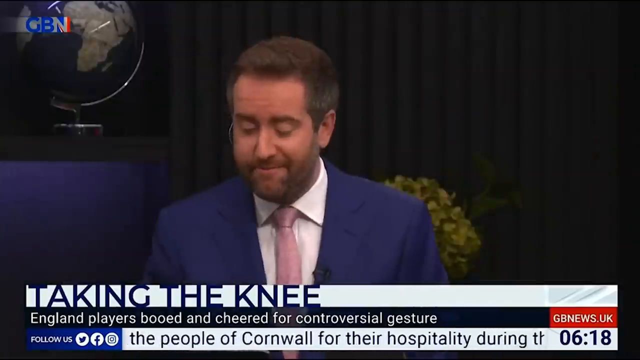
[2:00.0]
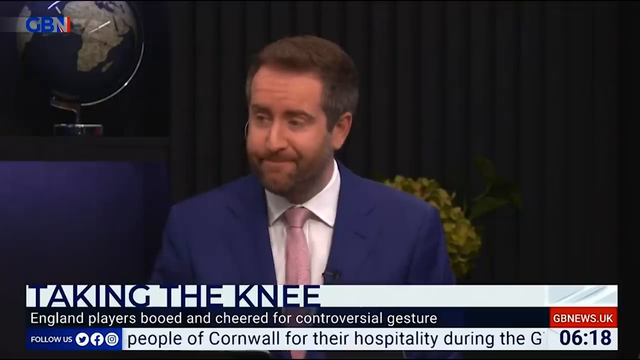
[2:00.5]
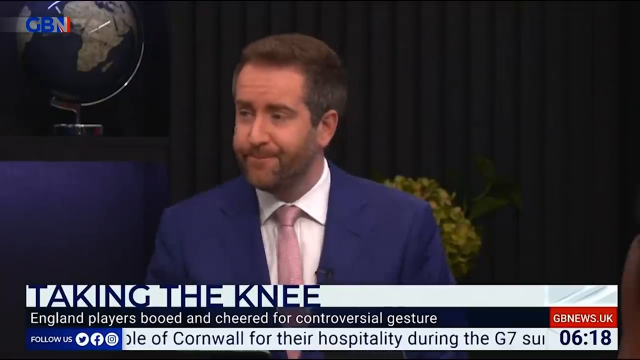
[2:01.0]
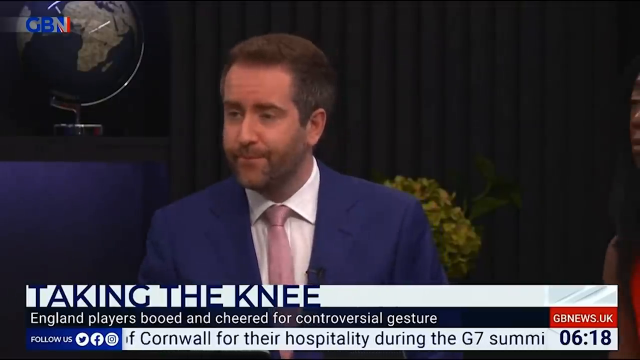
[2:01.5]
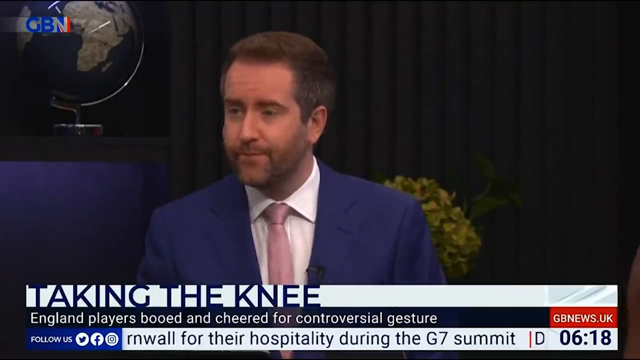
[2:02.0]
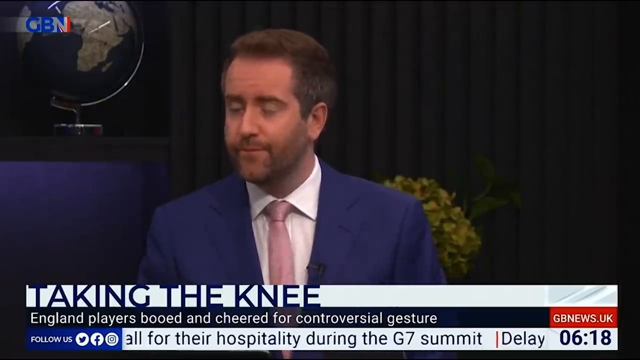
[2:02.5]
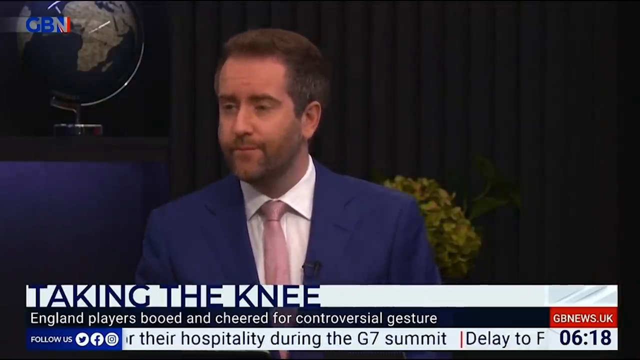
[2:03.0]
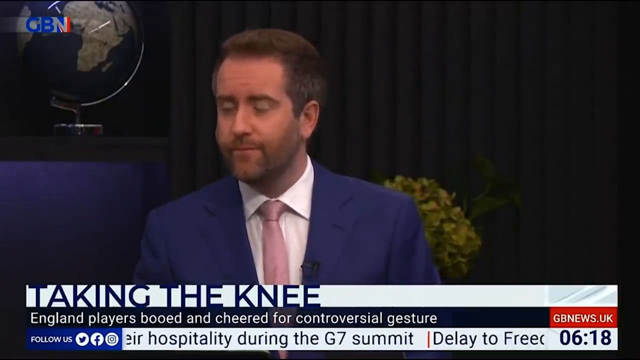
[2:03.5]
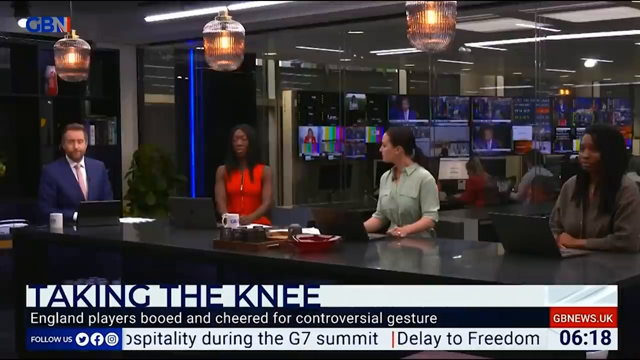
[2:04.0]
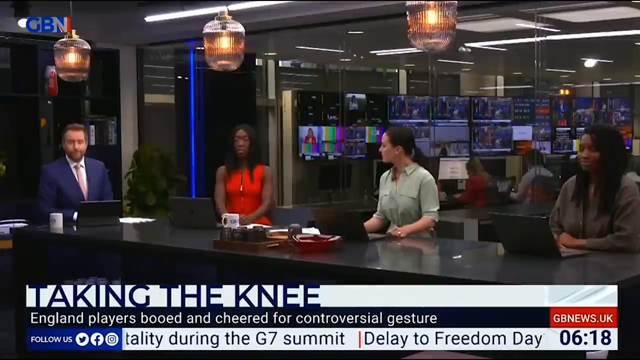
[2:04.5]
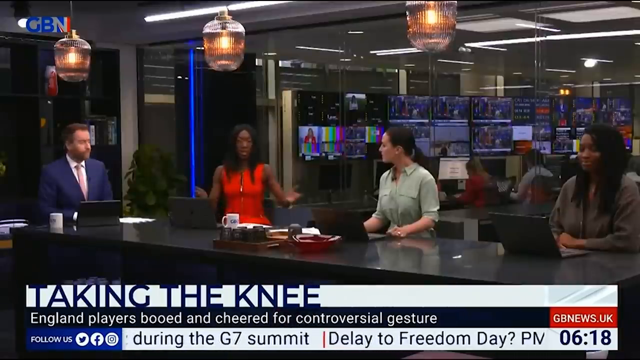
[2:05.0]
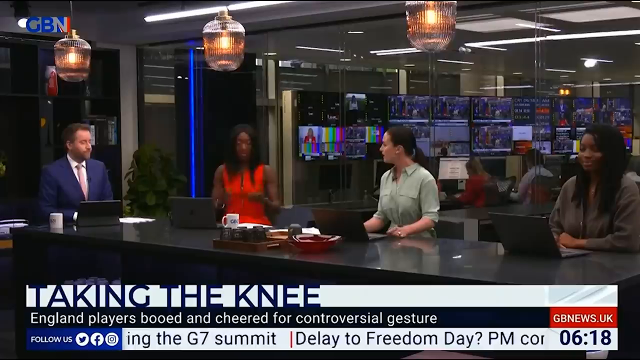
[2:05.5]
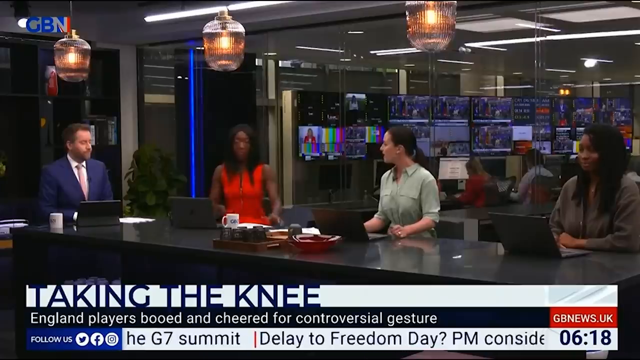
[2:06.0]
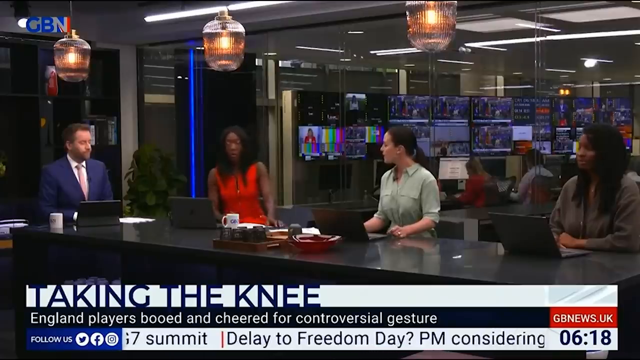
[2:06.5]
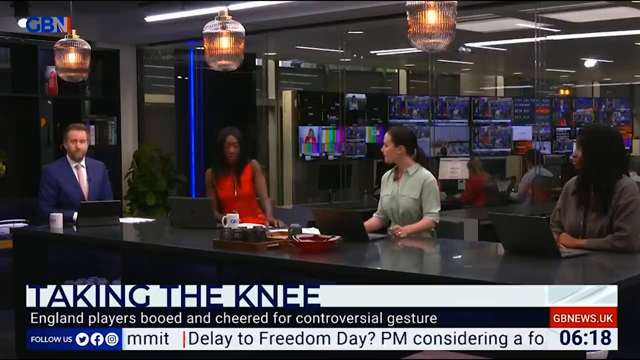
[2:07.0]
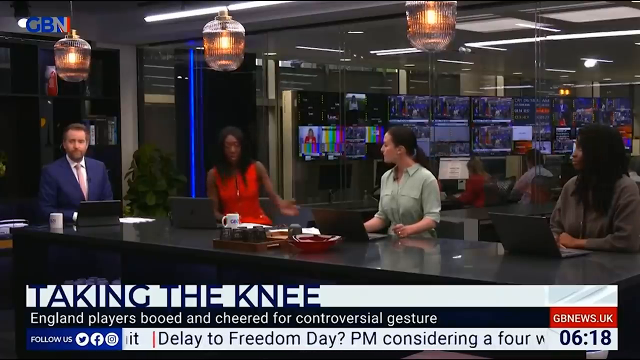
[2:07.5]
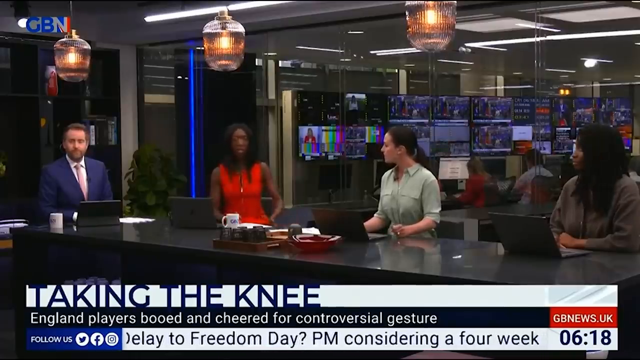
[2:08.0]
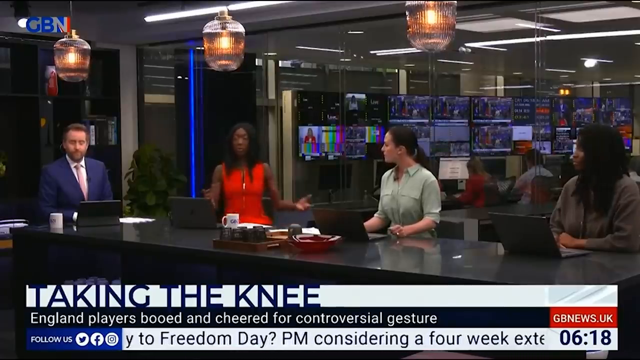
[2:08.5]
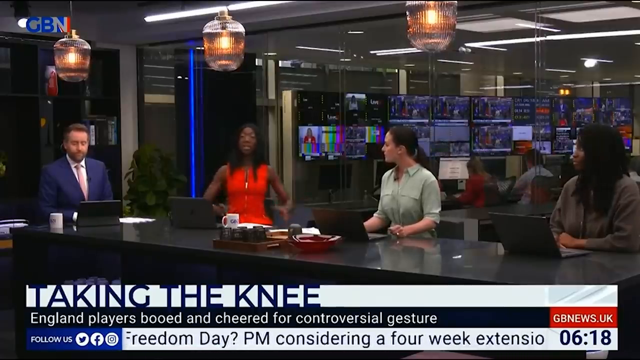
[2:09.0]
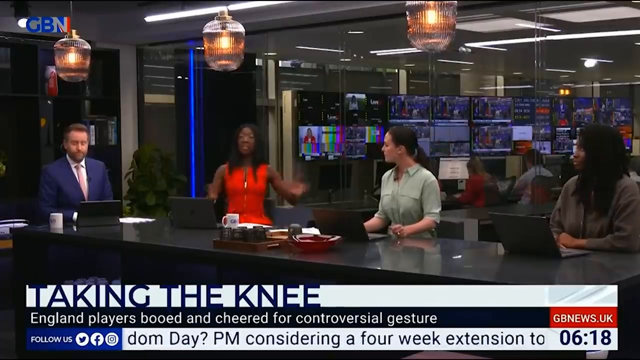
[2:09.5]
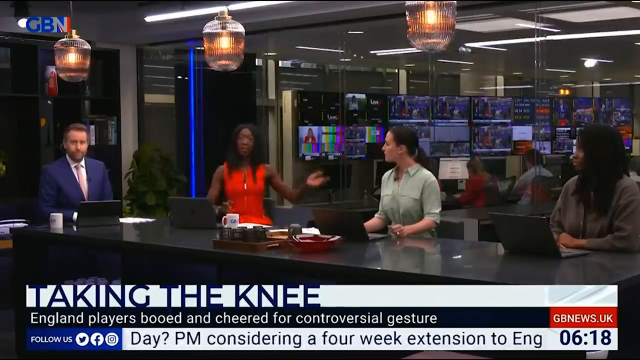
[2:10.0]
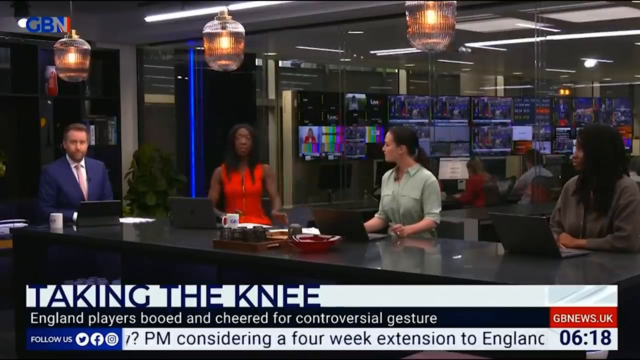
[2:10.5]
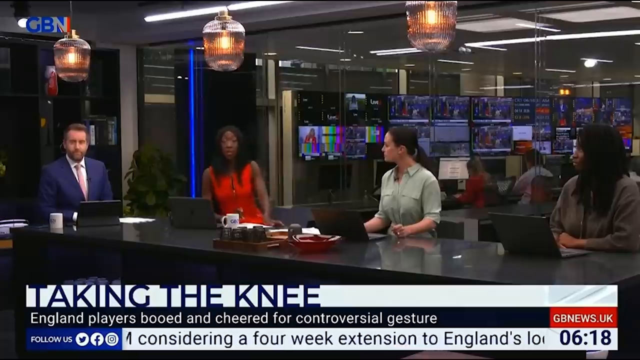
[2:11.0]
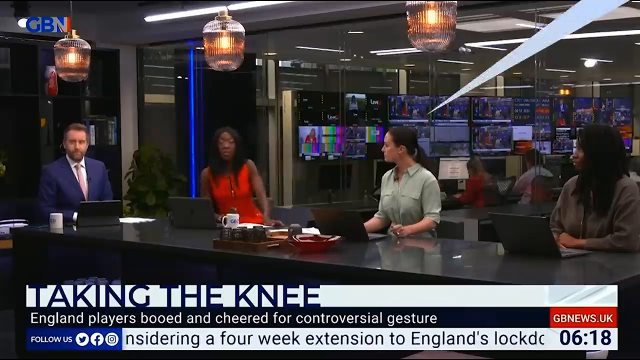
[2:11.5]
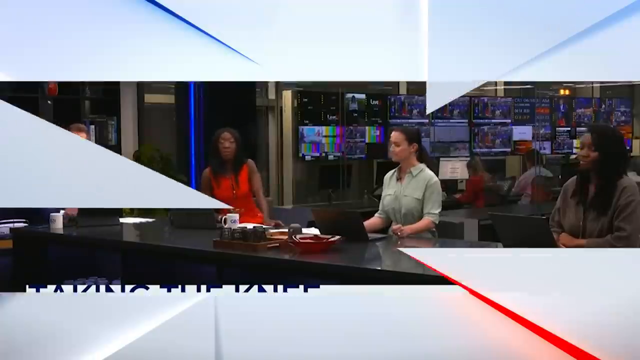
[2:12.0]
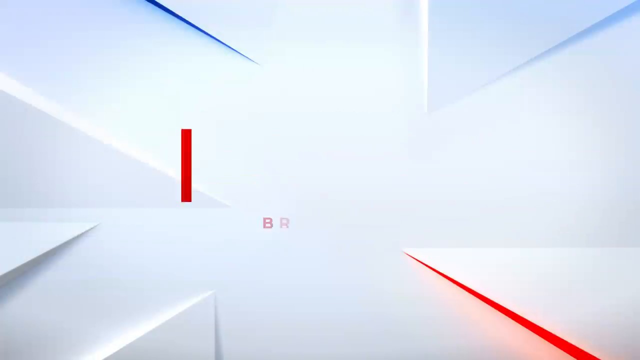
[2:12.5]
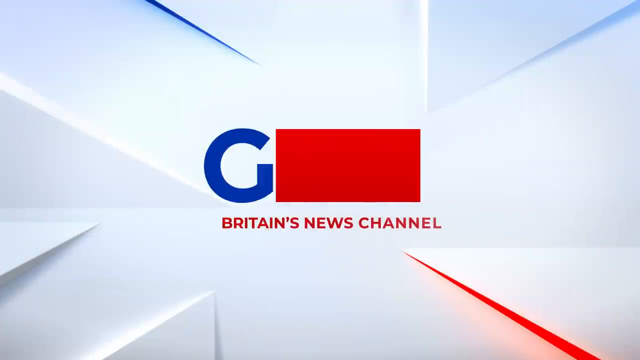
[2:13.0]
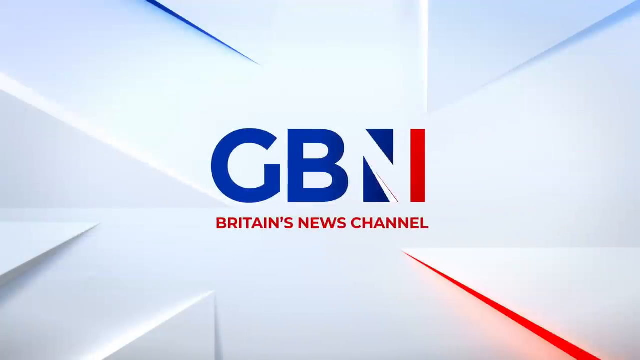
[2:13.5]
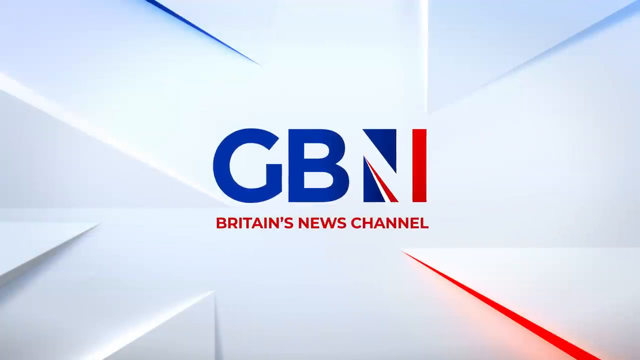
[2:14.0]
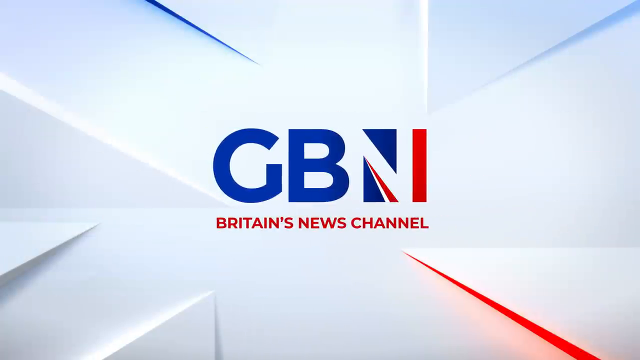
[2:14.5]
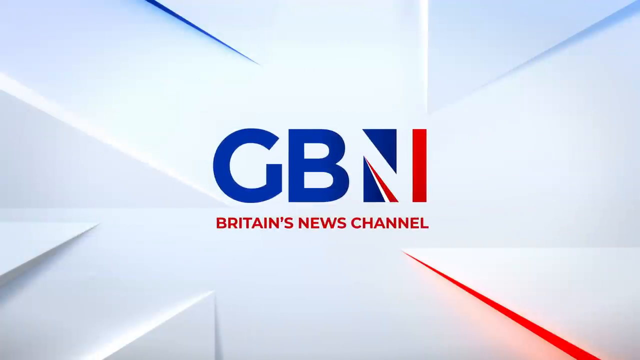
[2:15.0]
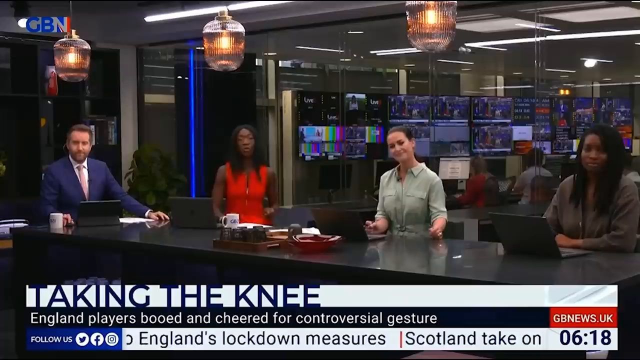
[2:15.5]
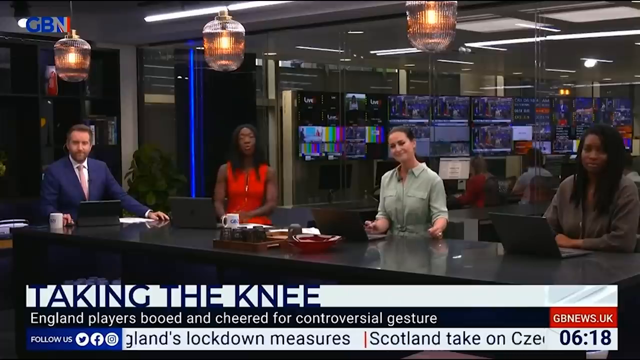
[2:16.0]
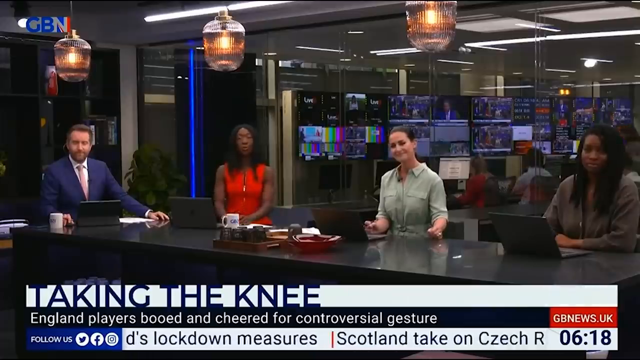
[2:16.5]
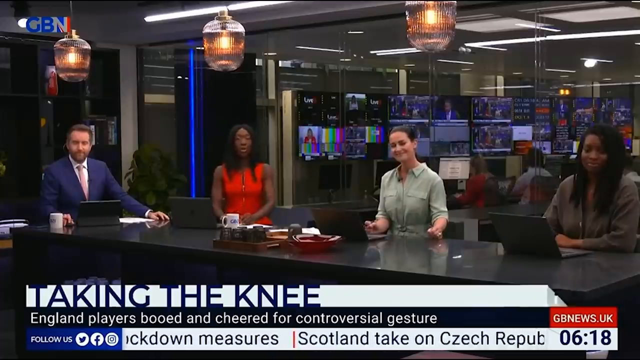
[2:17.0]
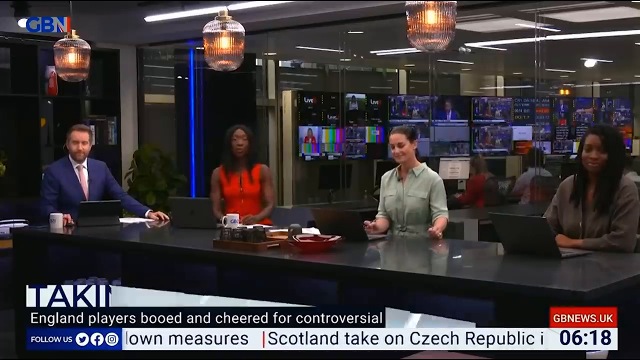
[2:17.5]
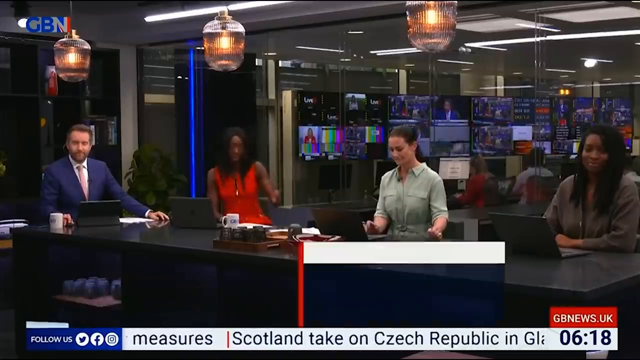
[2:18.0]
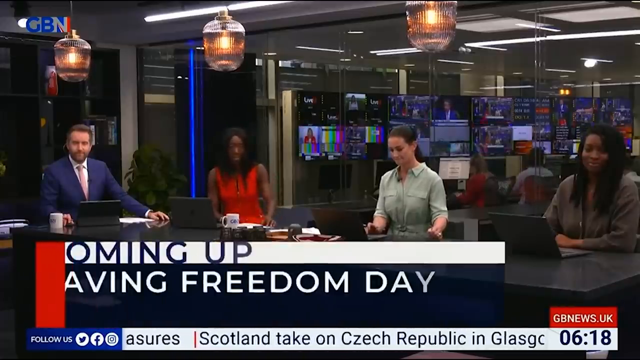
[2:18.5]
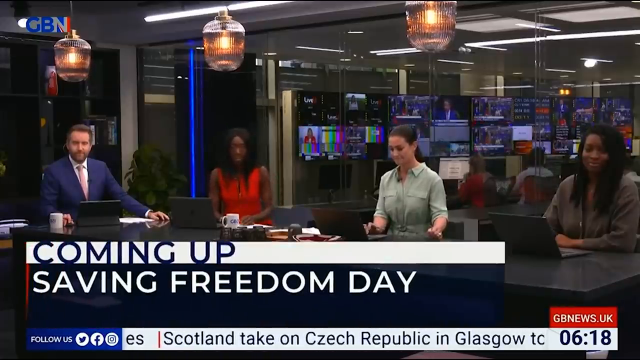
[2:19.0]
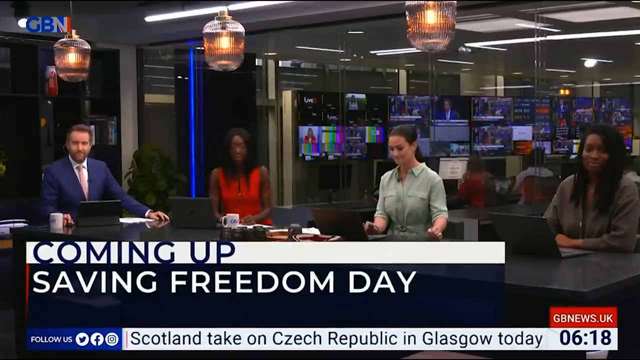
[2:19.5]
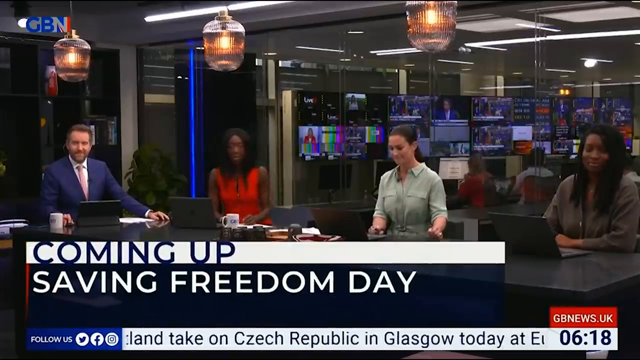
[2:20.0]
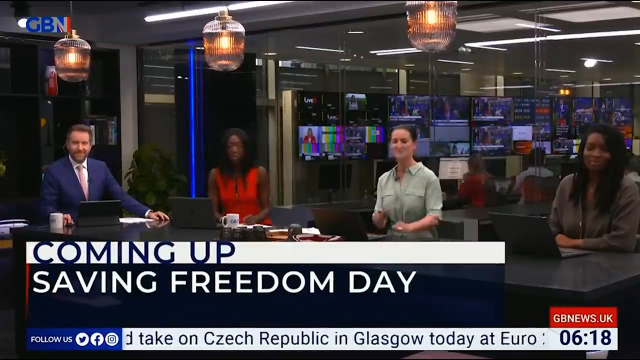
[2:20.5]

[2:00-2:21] A man in a blue suit with a short beard faces the camera. In the top left of the screen is a globe and the text "GBM." Below the man the text reads "taking the knee," and below that "England players booed and cheered for controversial gesture." The man looks toward the left side of the screen. A woman leans over from the right side of the screen, says something, and moves back to the right. The camera zooms out to show all four people at the table. The woman in the red dress holds her hands apart, palms facing each other, and makes a gesture like swooping things toward her body a few times. She leans on her right forearm on the table and makes more gestures, holding her left hand out with her palm sort of toward her and moving it in a circle. The screen then turns white, a red square appears and moves to the right, and the text "GBM" appears in blue letters with "Britain's News Channel" in red letters below it. The video returns to the people at the desk, where the woman in red is talking. A banner appears reading "Coming up, Saving Freedom Day."